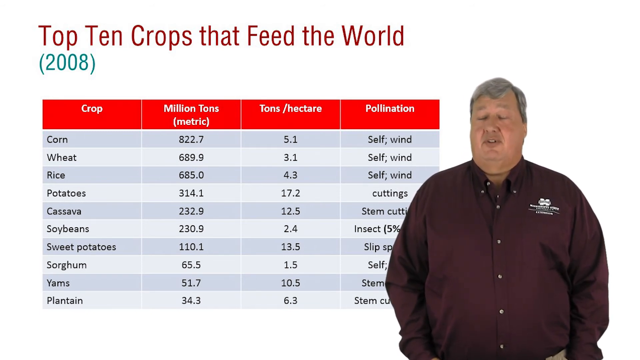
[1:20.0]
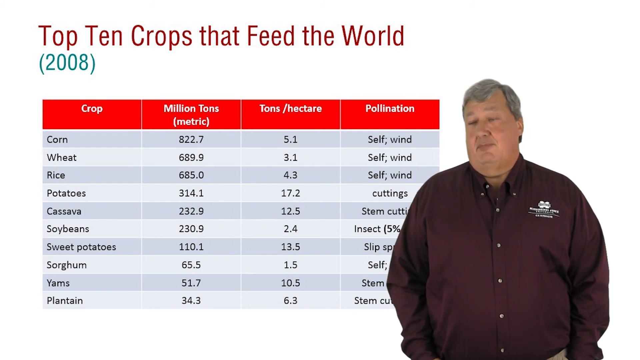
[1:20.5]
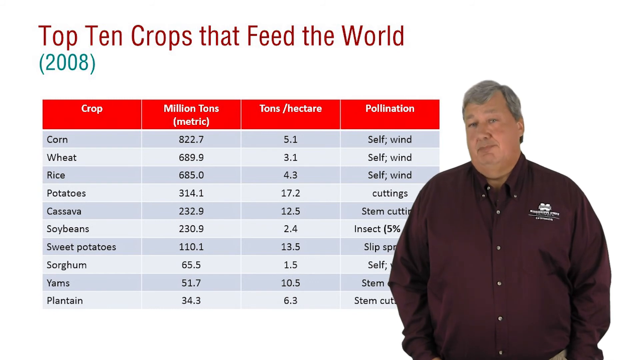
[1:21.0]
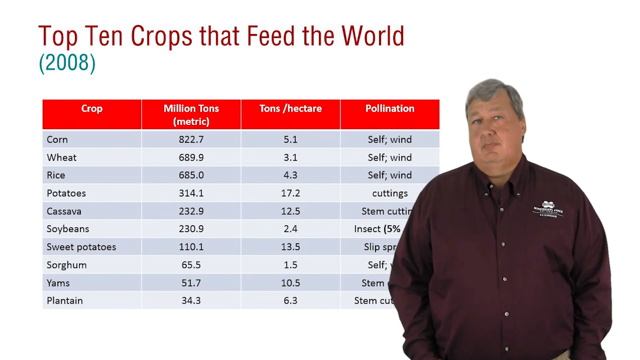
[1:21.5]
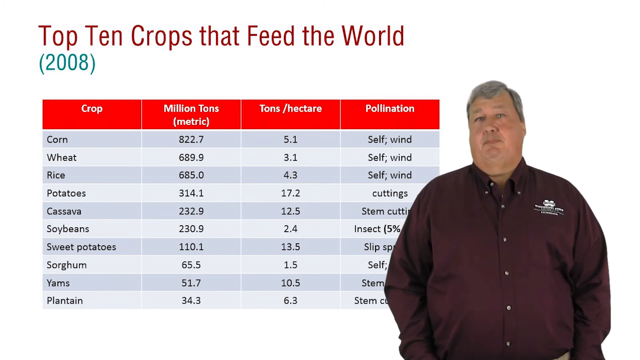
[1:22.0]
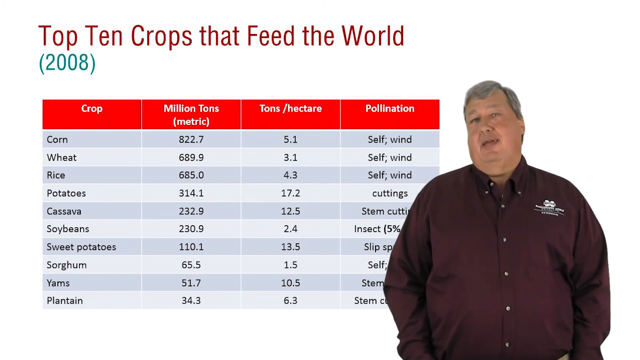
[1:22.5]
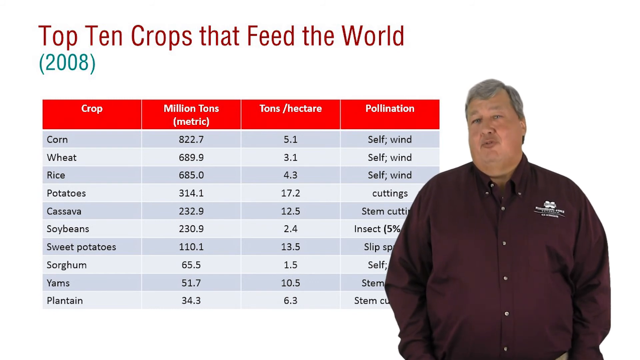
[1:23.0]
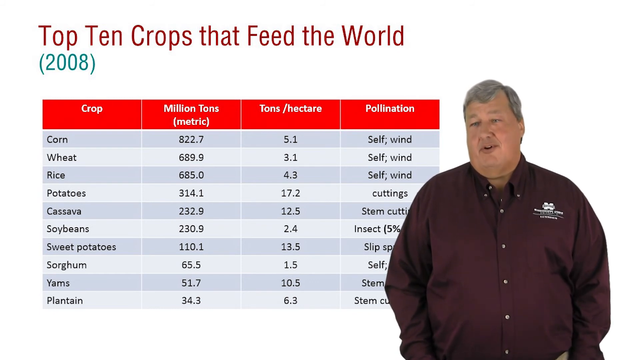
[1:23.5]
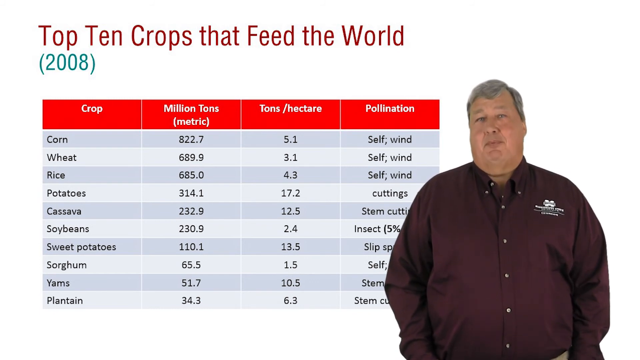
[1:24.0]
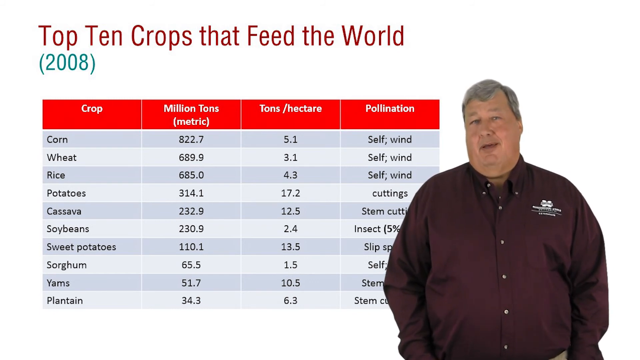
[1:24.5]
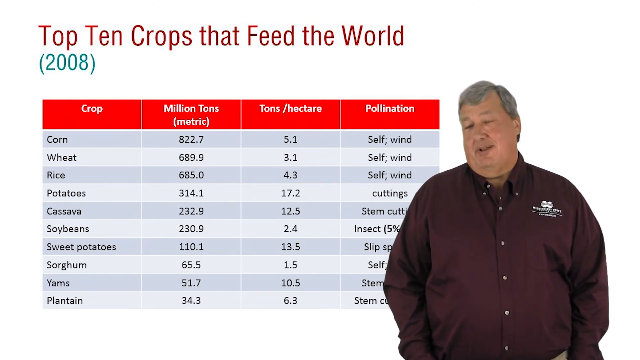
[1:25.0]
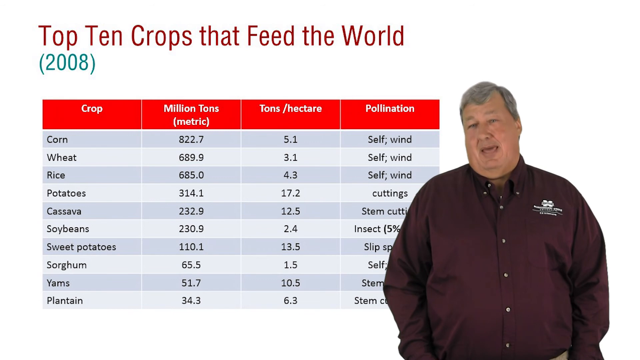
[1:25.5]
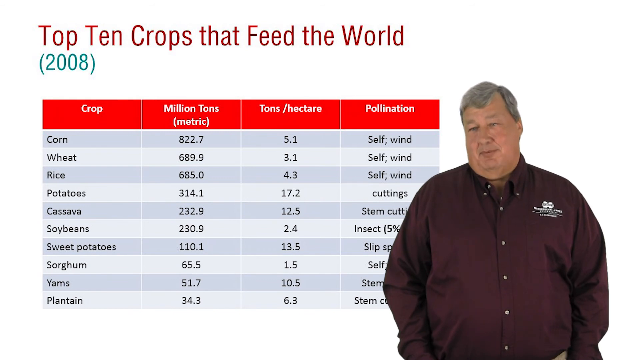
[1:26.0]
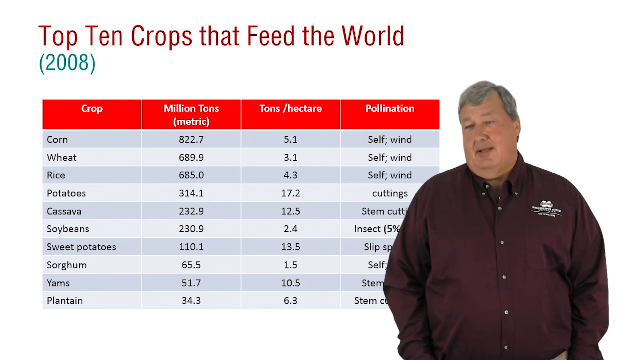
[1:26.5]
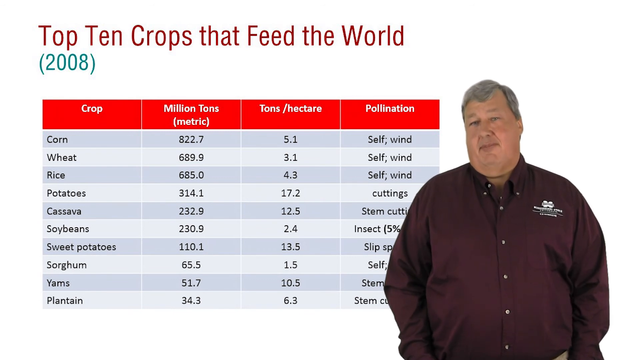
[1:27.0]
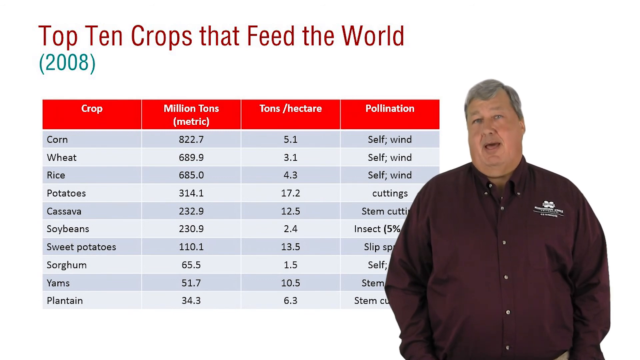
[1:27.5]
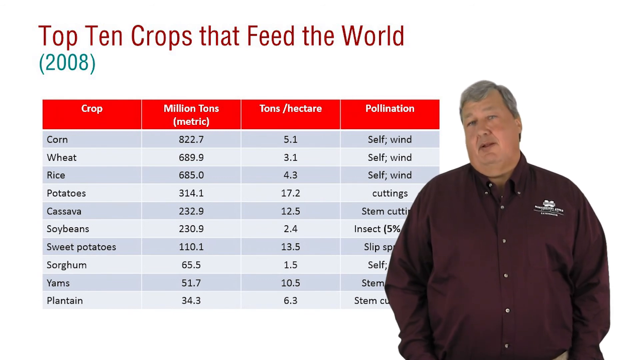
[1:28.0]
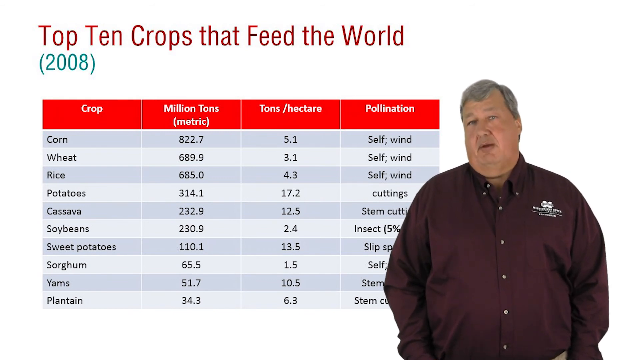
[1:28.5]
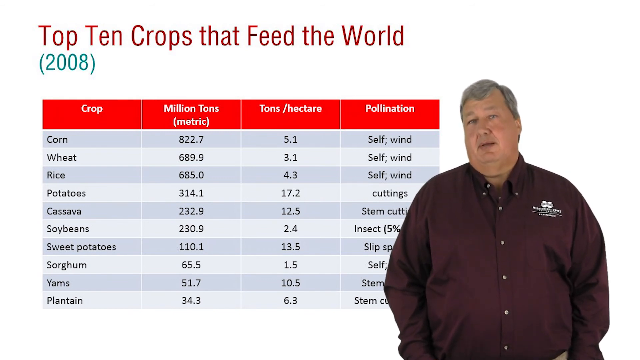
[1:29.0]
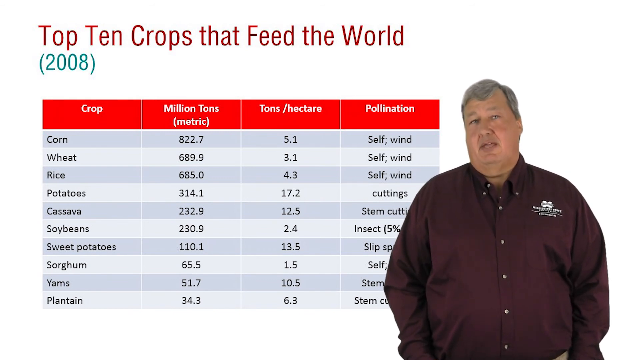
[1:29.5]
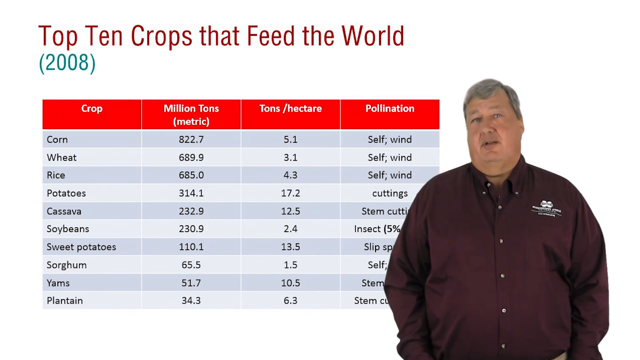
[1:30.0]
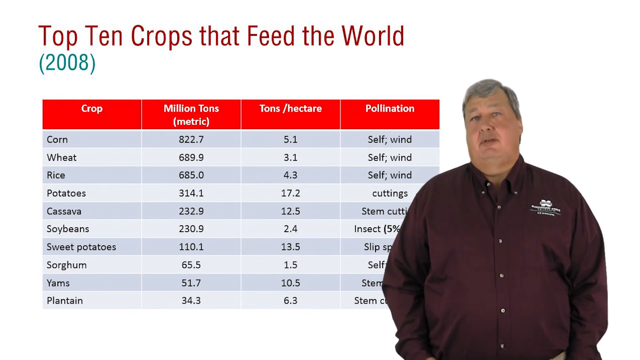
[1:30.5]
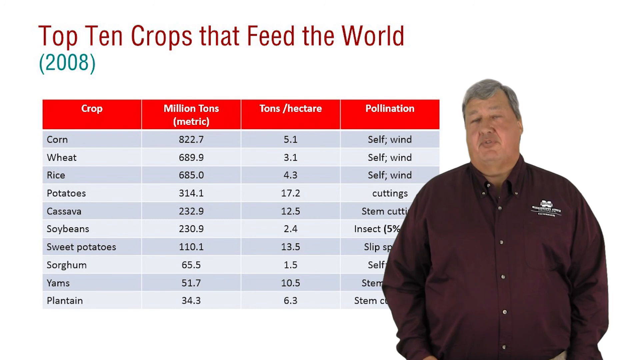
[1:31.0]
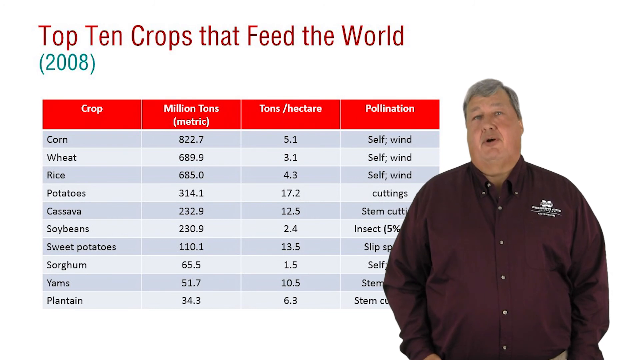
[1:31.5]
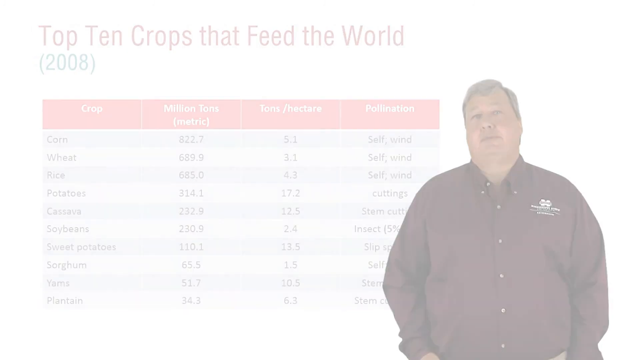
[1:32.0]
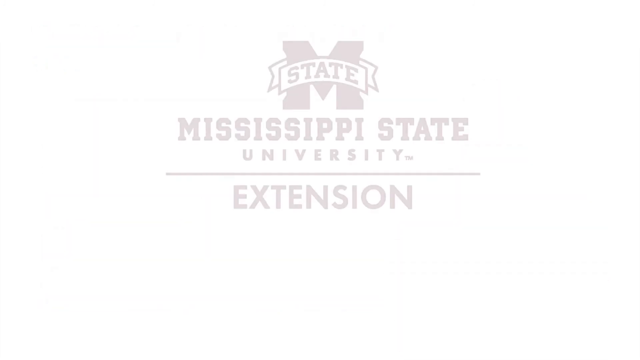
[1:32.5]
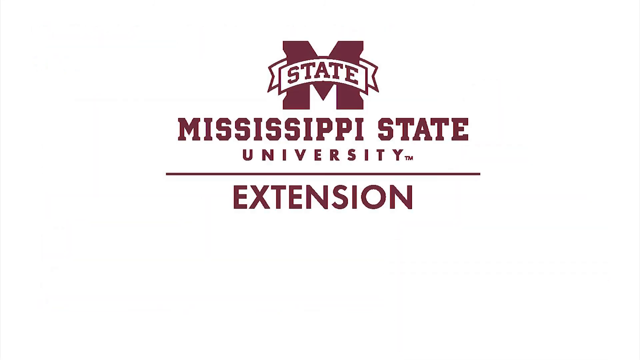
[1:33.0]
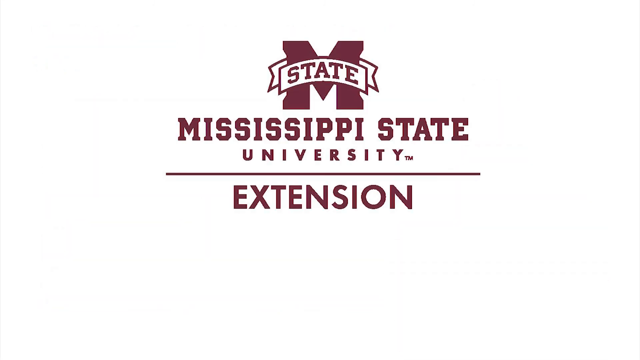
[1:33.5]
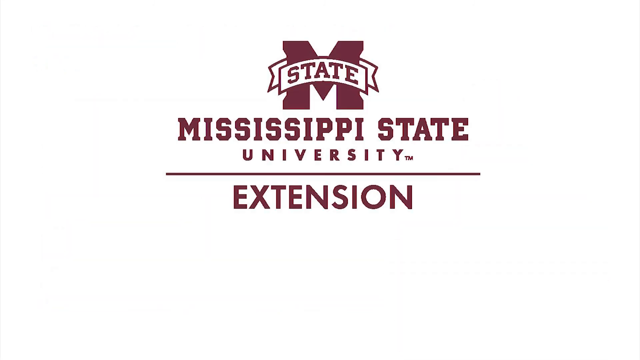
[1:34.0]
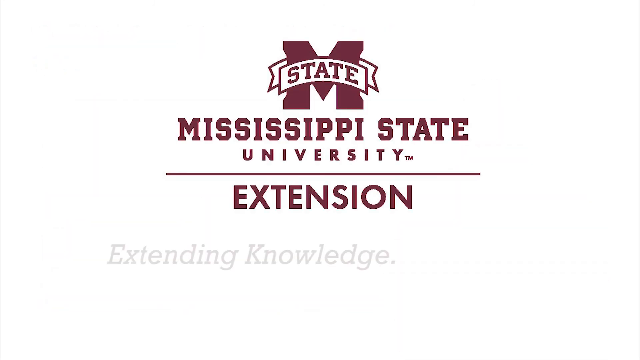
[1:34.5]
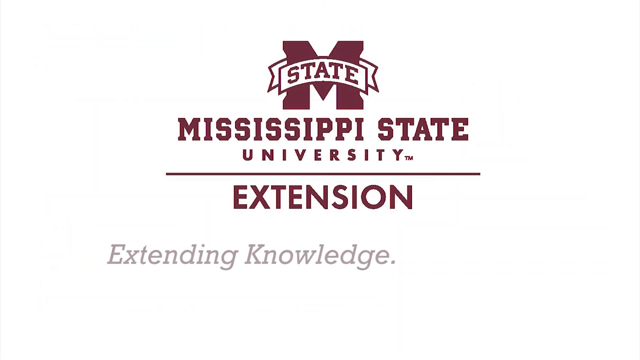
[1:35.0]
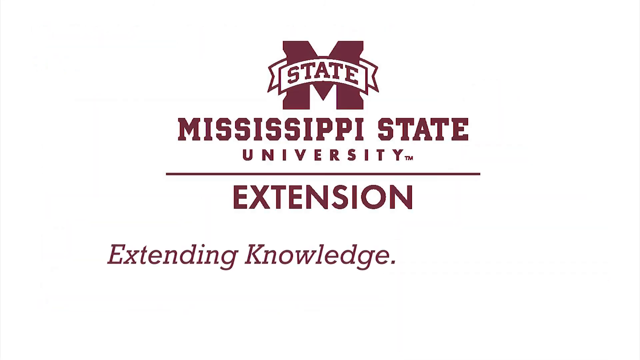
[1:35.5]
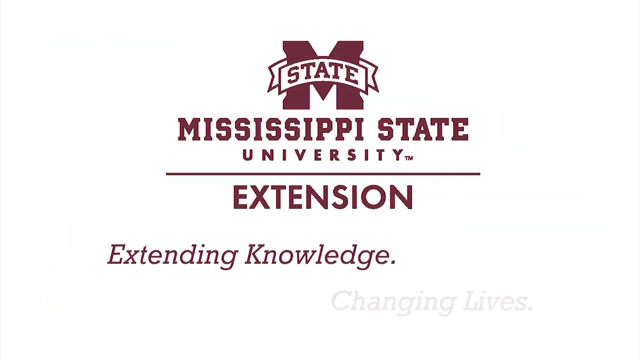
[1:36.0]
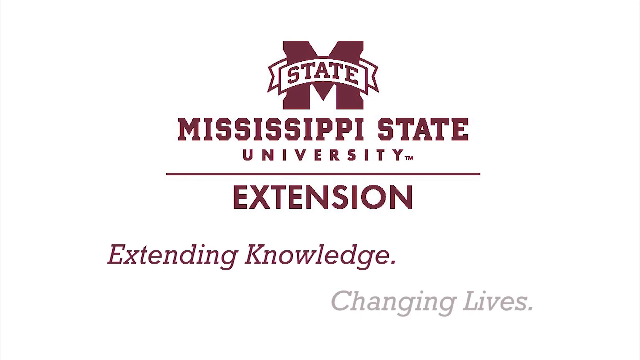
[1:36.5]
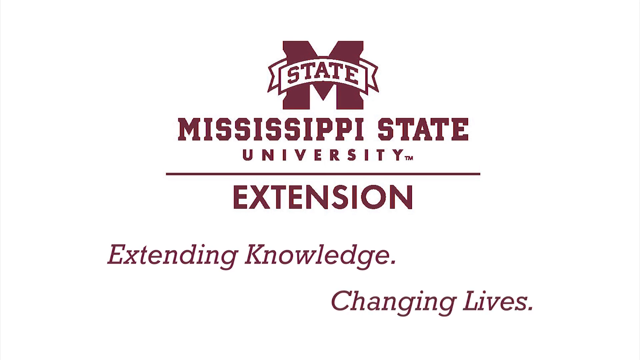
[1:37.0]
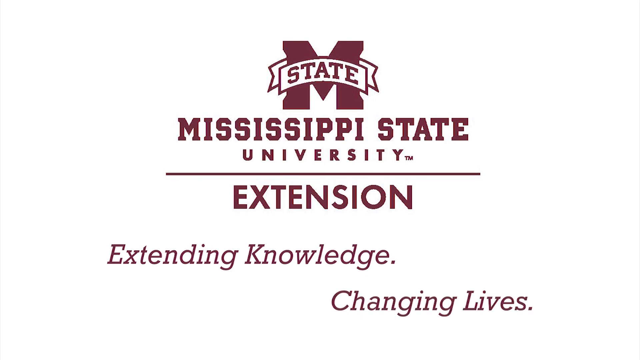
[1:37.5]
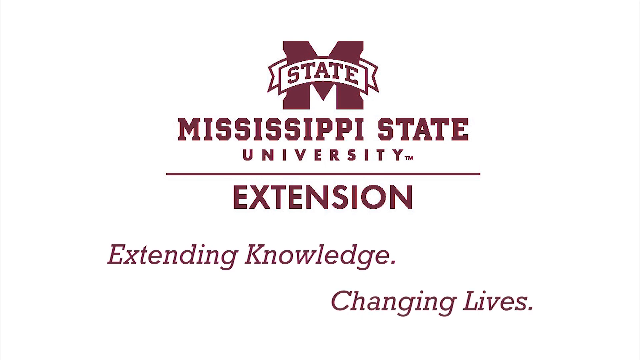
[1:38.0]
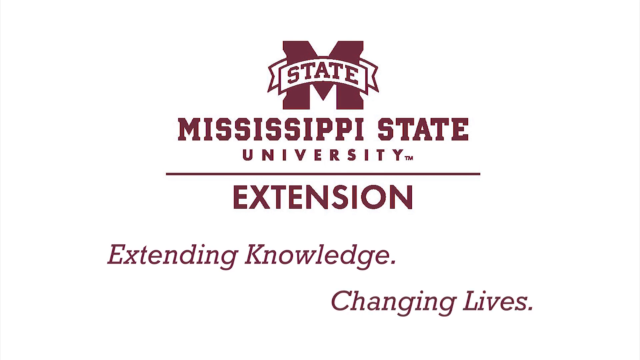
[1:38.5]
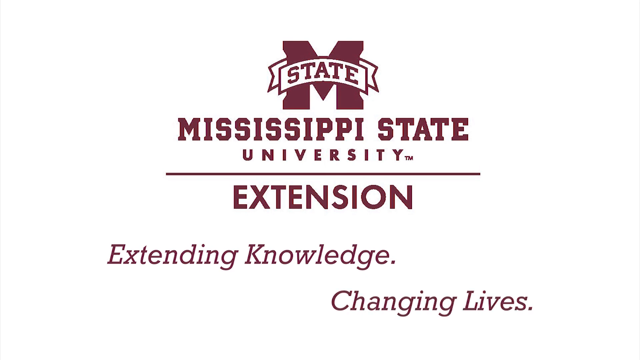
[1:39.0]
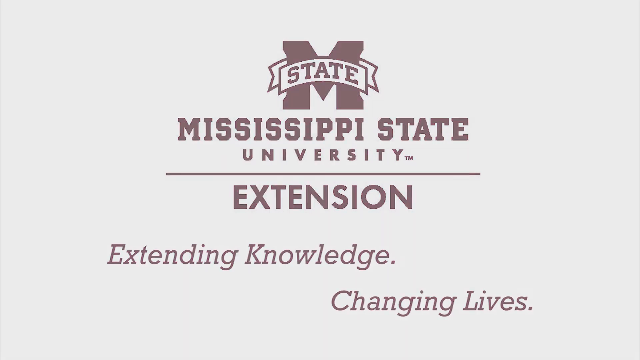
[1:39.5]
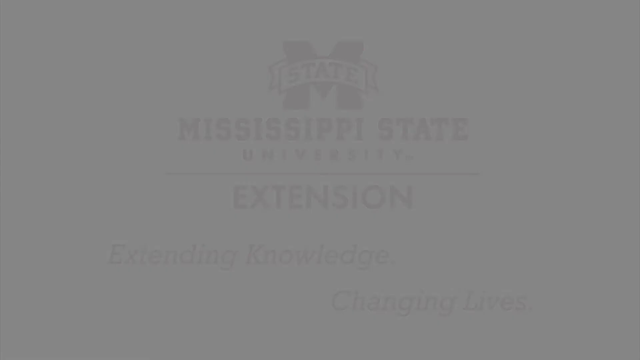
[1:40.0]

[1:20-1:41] A slide with a white background has large brown text at the top left reading "top 10 crops that feed the world," with "2008" underneath on the left in teal letters and in parentheses. Below is a chart of the 10 crops grown the most that feed the world. It has four columns with heading labels "crop," "million tons," "tons/hectare," and "pollination" in red boxes. Underneath are 10 rows of crops in alternating gray and light gray boxes; the first column lists corn, wheat, rice, potatoes, cassava, soybeans, sweet potatoes, sorghum, yams, and plantain, and the remaining columns are filled in with the measurements and pollination type. On the right side of the screen, a man speaks, giving a presentation on this slide. He looks to be about 50 years old, with dark gray hair and blue eyes. He is a larger man with a cleanly shaved face, chubby cheeks and a double chin, wearing a long-sleeved maroon button-up shirt with a logo on his left chest. He stands with his arms by his side, speaking to the camera with a neutral expression. The slide then changes to a white background with the Mississippi State logo at the top: a letter M with a ribbon across it that reads "State." Beneath it is "Mississippi State University," a thin horizontal line, and then "Extension," and at the bottom of the screen "Extending Knowledge, Changing Lives."